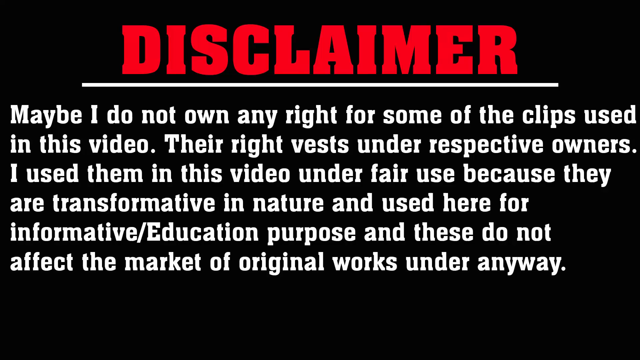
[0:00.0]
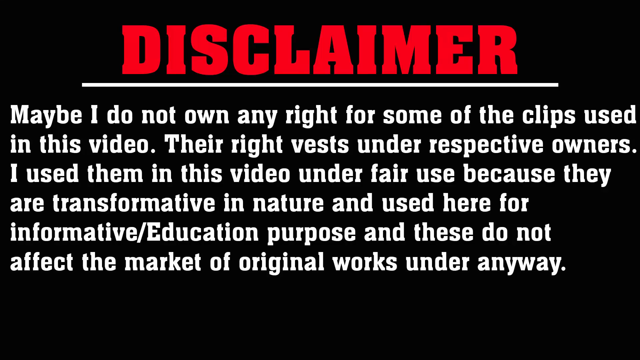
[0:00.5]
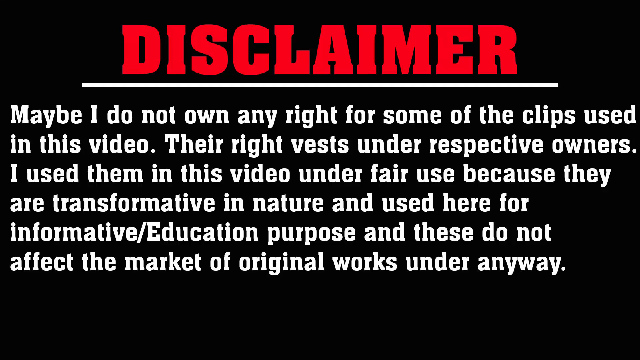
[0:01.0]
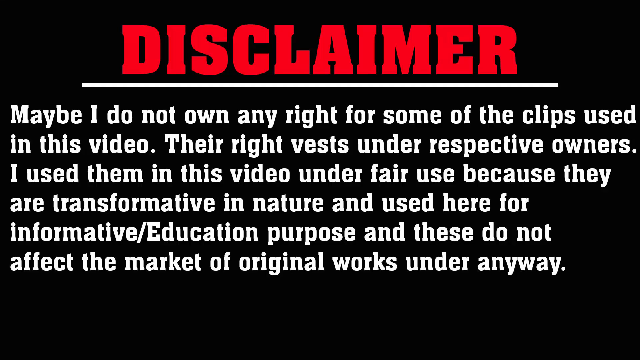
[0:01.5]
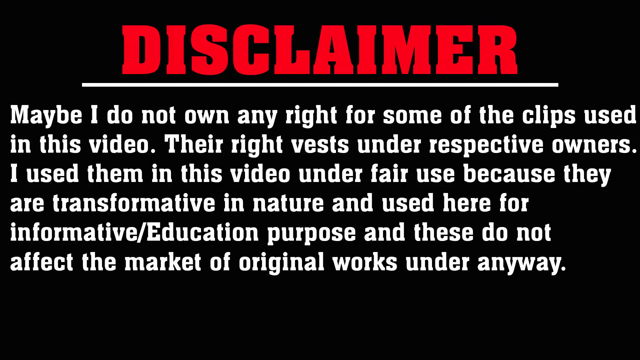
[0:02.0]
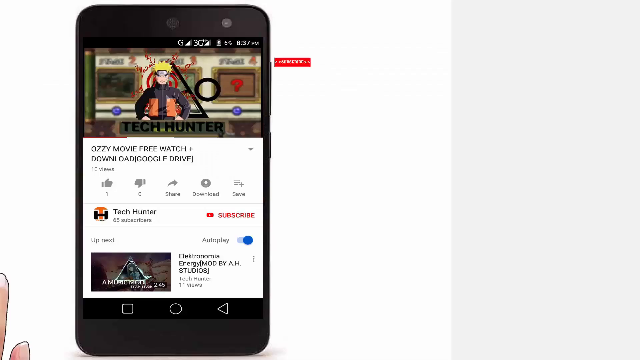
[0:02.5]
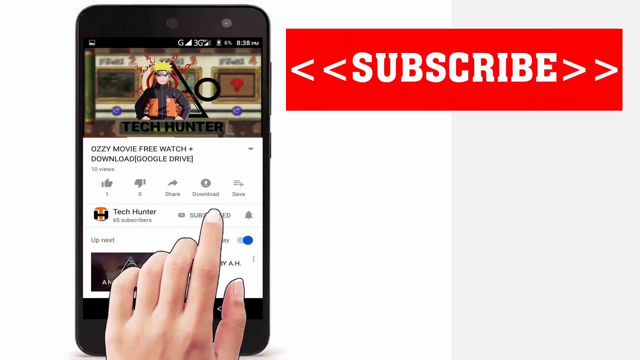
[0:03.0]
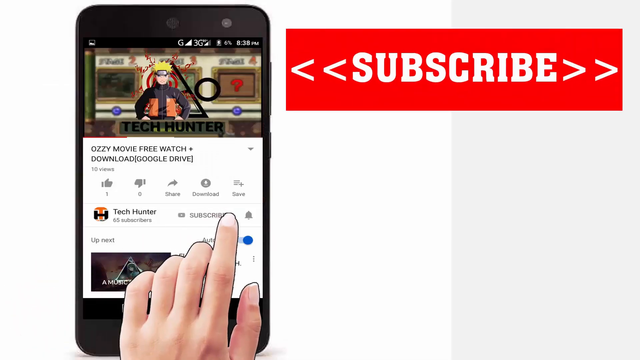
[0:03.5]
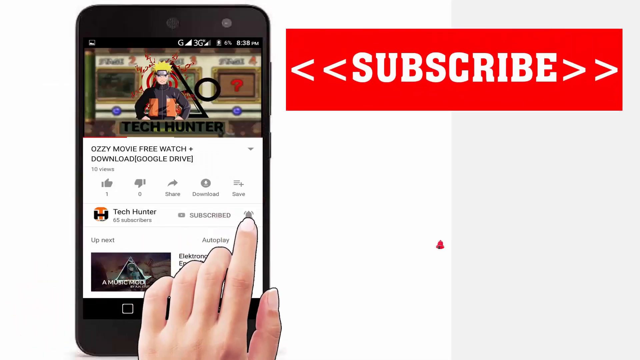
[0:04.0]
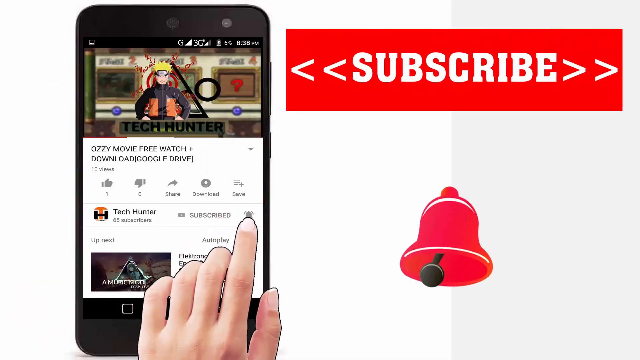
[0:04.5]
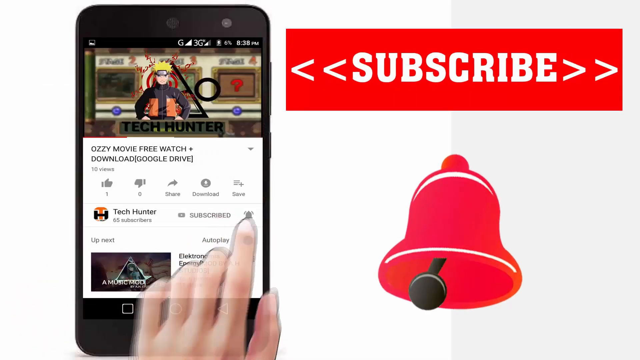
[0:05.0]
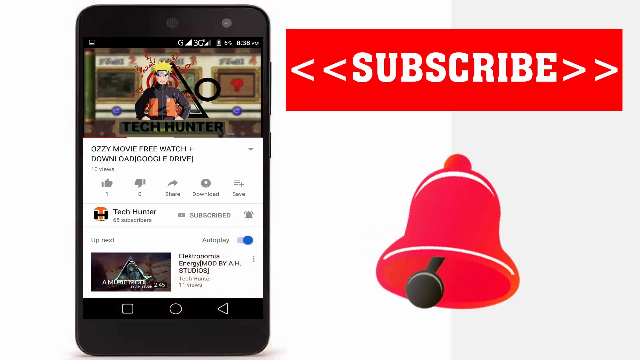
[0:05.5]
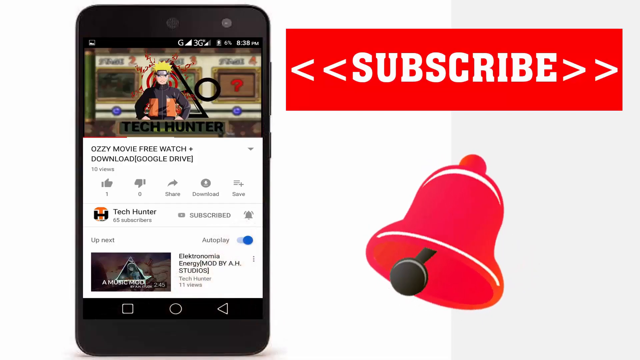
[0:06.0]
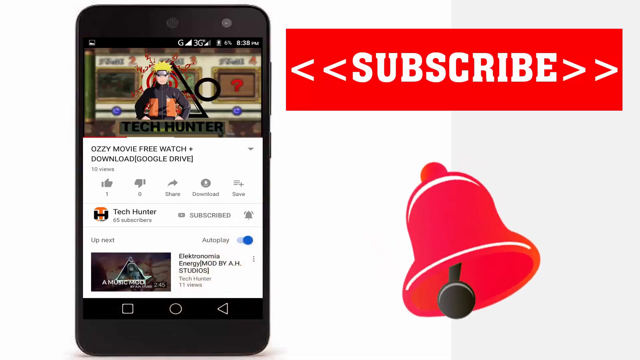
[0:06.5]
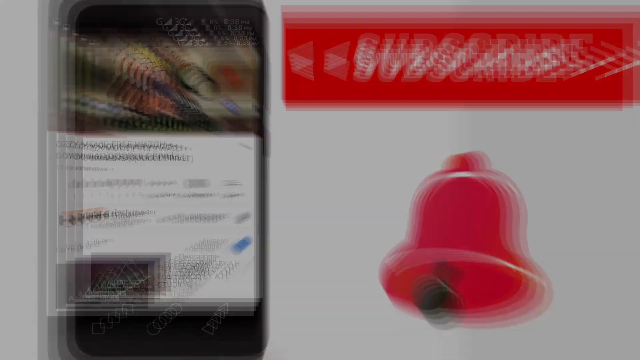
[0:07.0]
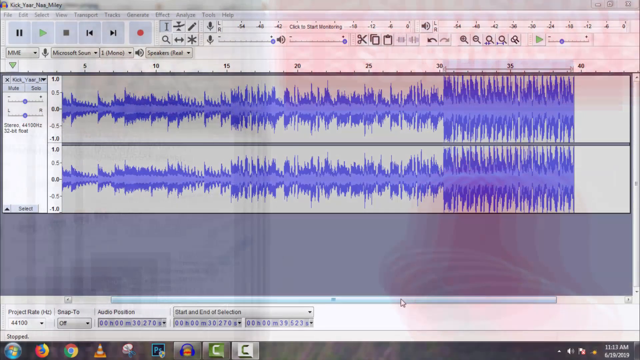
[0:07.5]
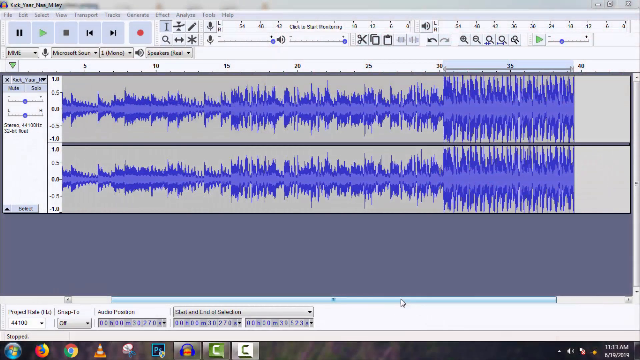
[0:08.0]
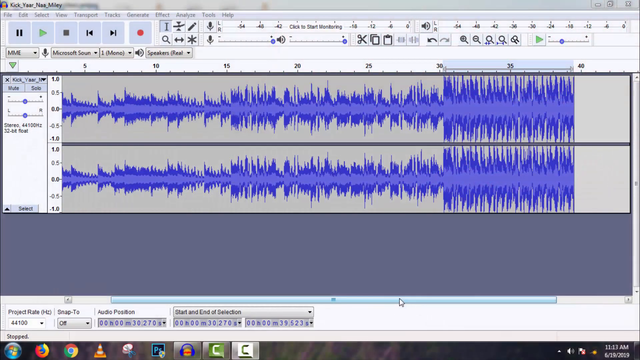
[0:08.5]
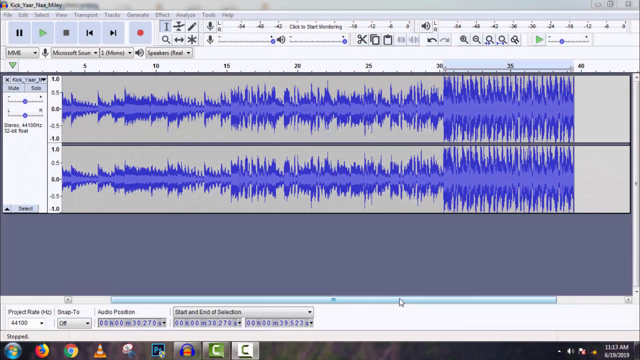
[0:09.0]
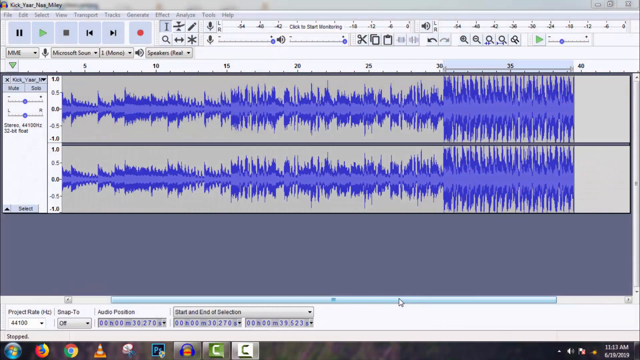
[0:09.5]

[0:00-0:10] The video opens on a black screen with the word "disclaimer" in all capital red letters at the top, with a white line drawn all the way underneath it. Below, in white letters on the black background, text reads "I do not own any rights for some of the clips used in this video" and continues "I use them in this video under fair use because they are transformative in nature and used here for informative education purpose." The view then switches to a person's phone showing a YouTube channel, with the option to click the subscribe button. Next comes what looks like some type of equalizer display showing music playing, with different wavelengths shown.